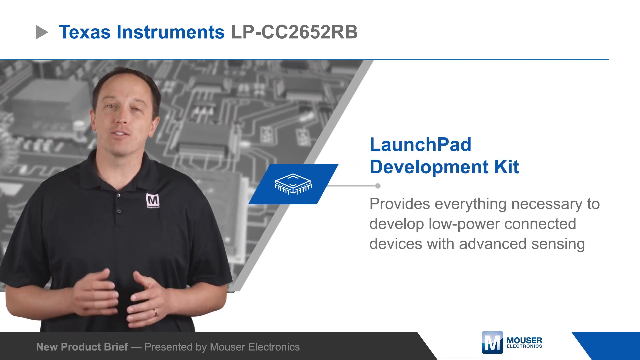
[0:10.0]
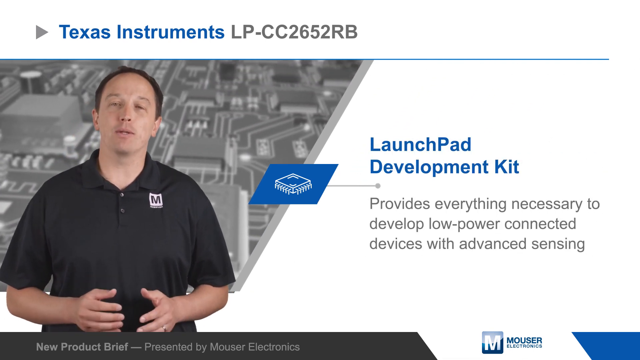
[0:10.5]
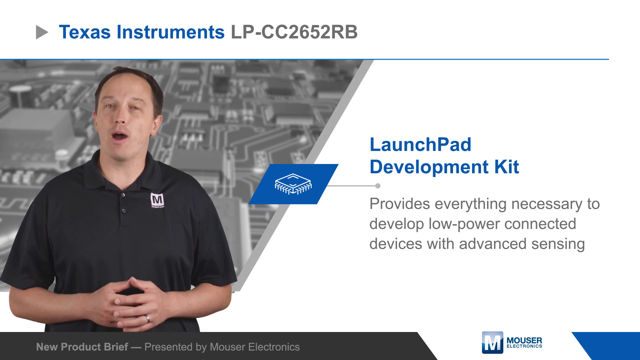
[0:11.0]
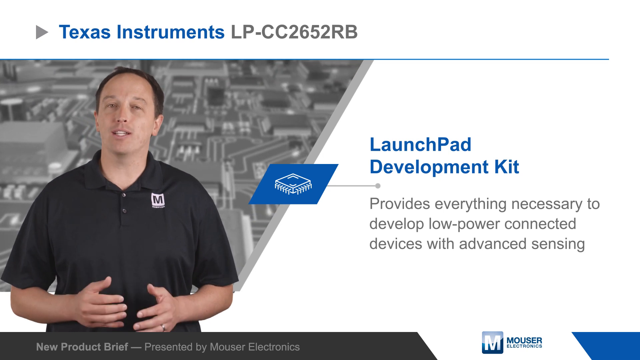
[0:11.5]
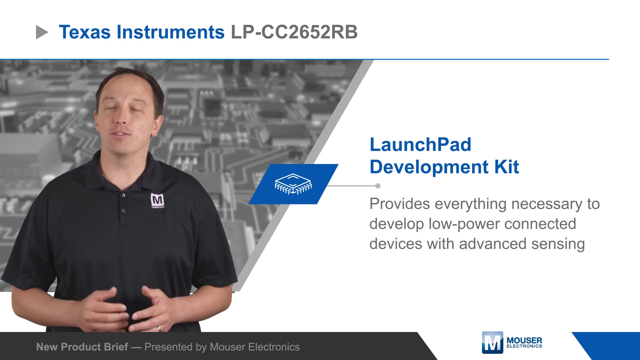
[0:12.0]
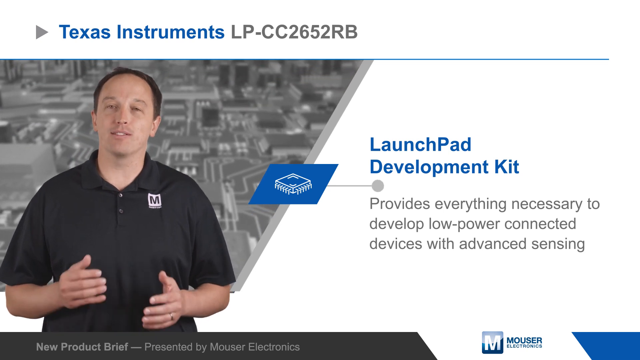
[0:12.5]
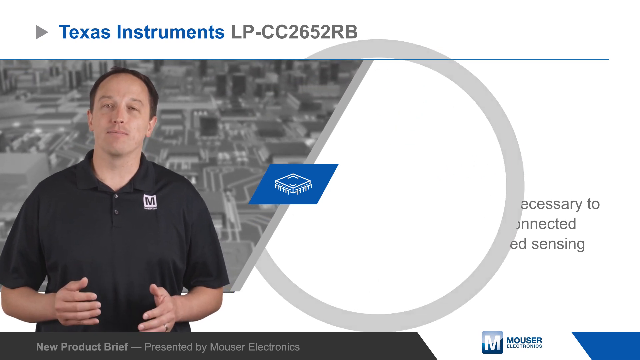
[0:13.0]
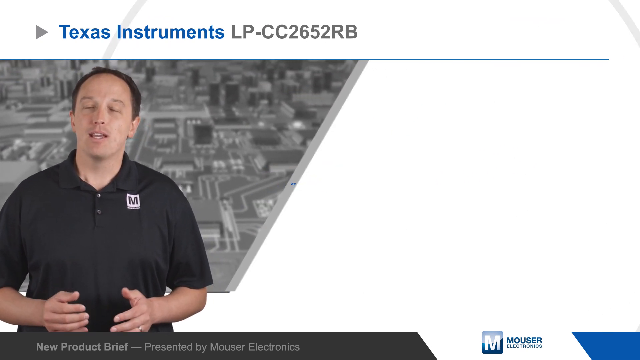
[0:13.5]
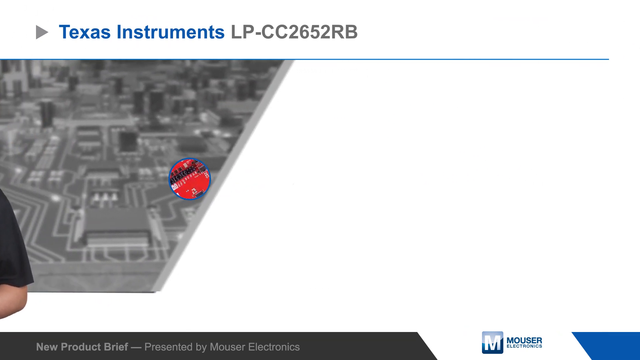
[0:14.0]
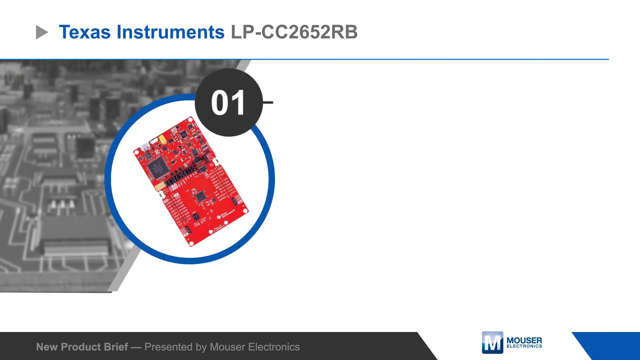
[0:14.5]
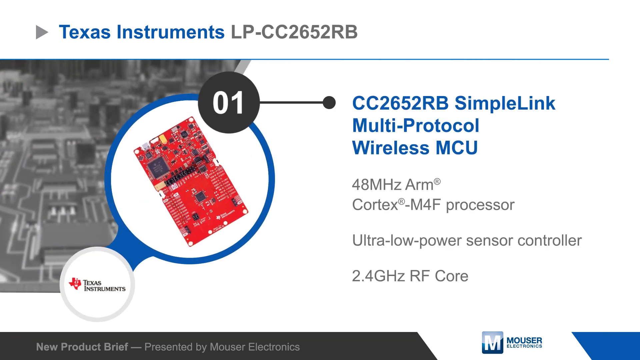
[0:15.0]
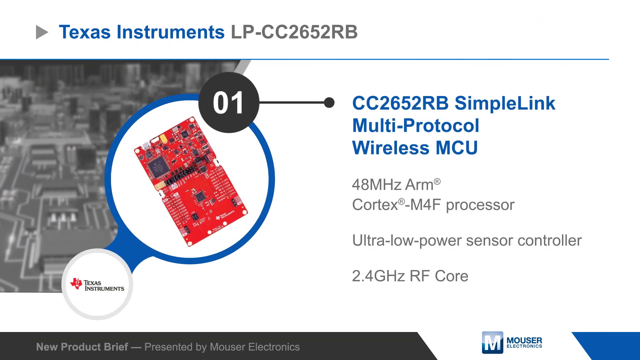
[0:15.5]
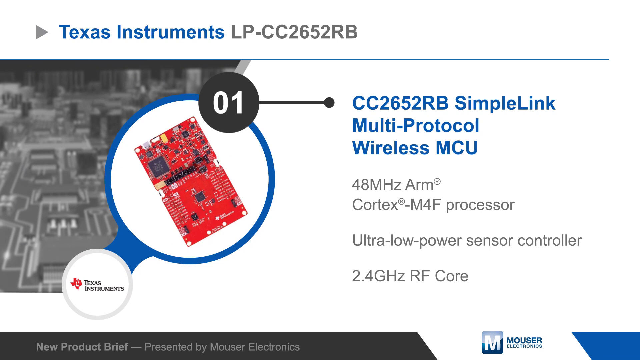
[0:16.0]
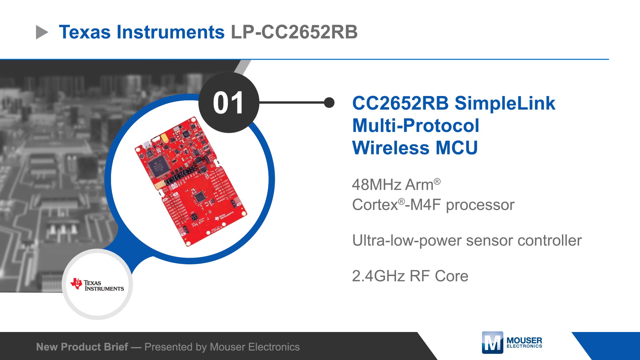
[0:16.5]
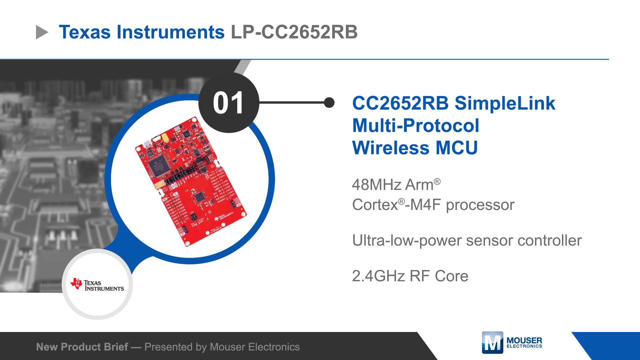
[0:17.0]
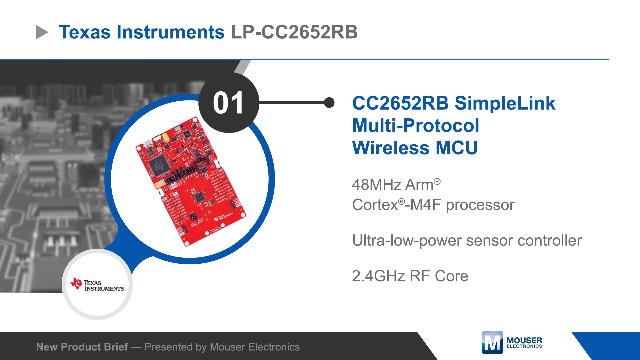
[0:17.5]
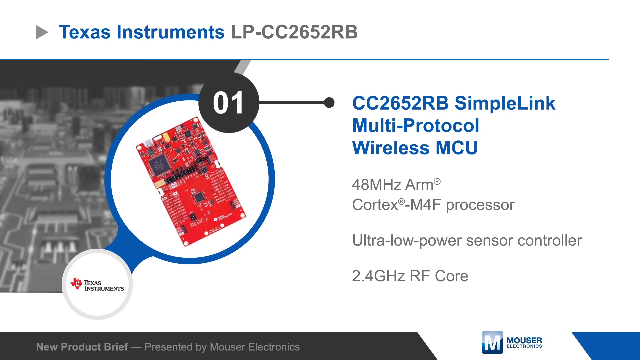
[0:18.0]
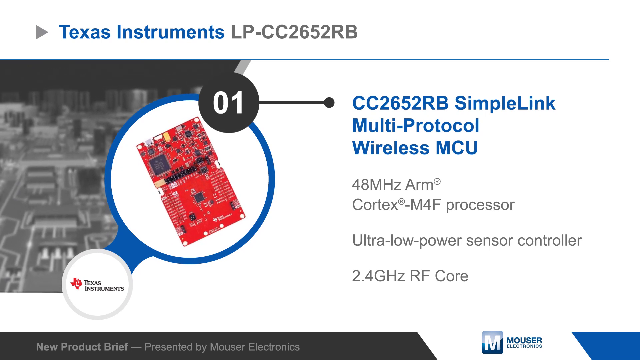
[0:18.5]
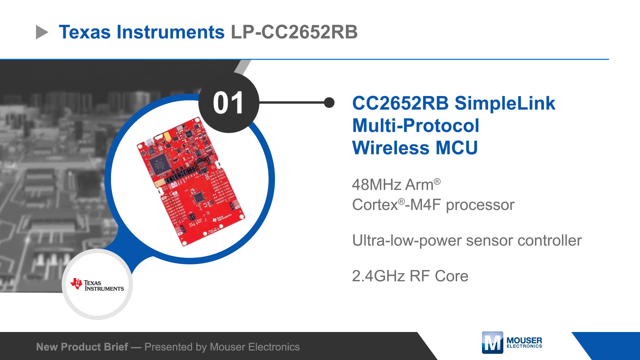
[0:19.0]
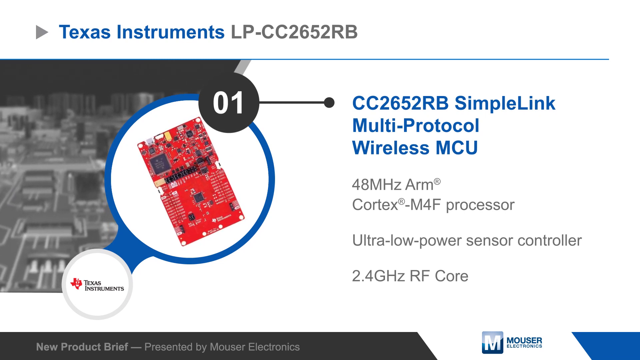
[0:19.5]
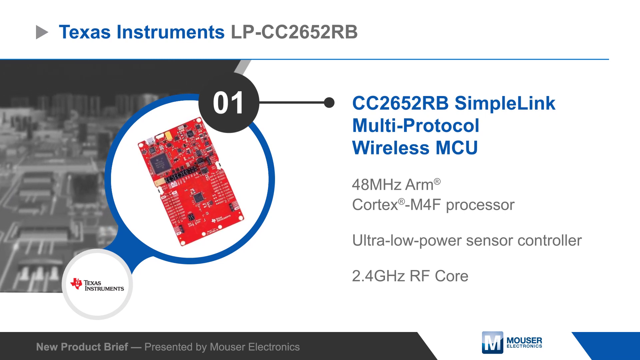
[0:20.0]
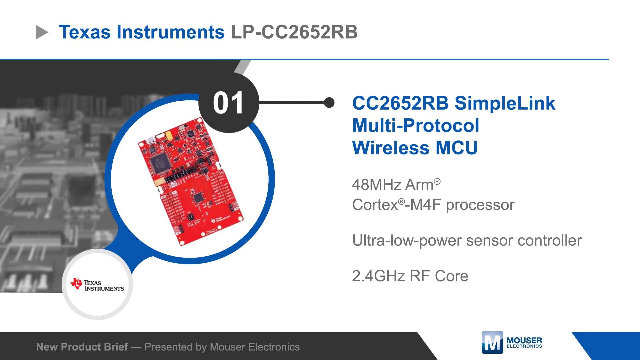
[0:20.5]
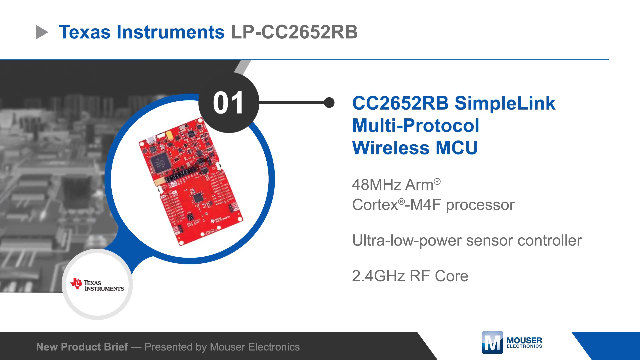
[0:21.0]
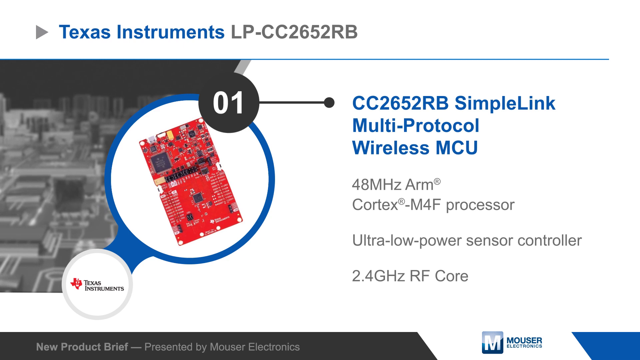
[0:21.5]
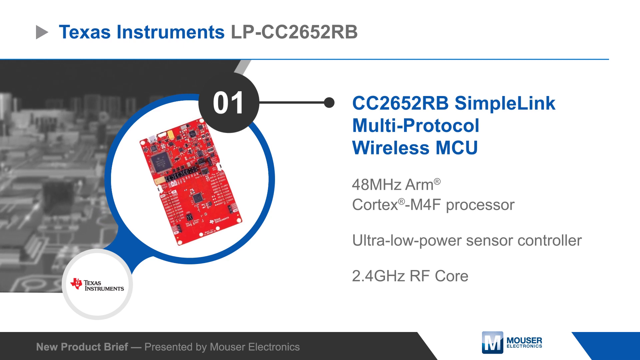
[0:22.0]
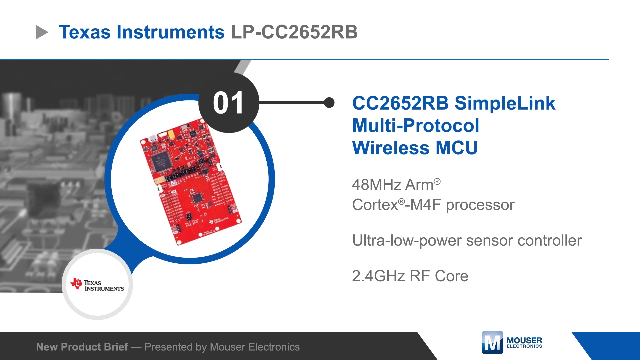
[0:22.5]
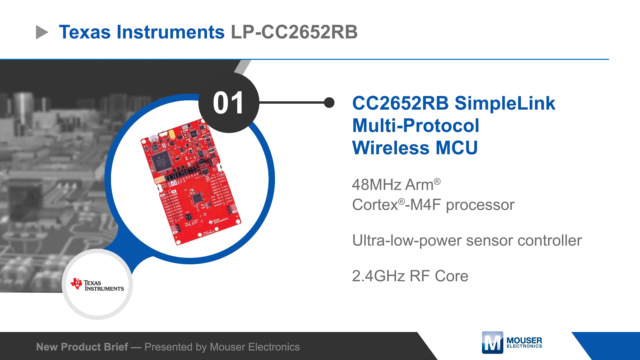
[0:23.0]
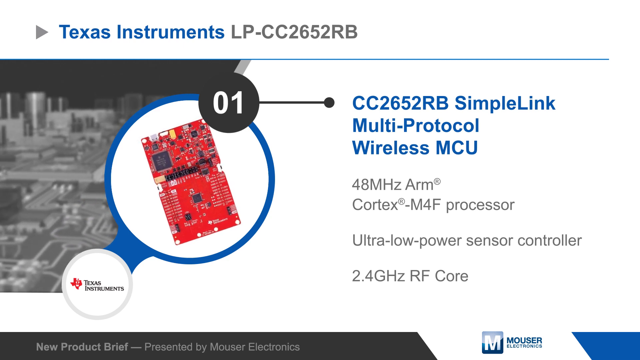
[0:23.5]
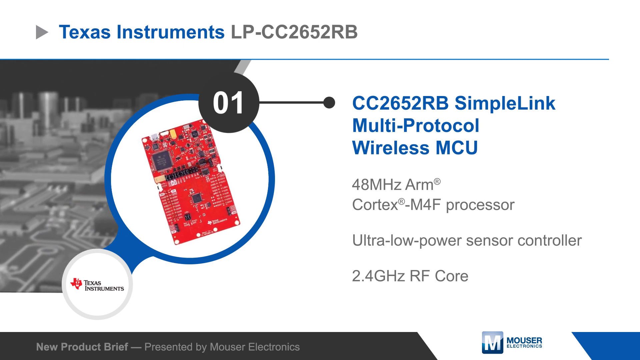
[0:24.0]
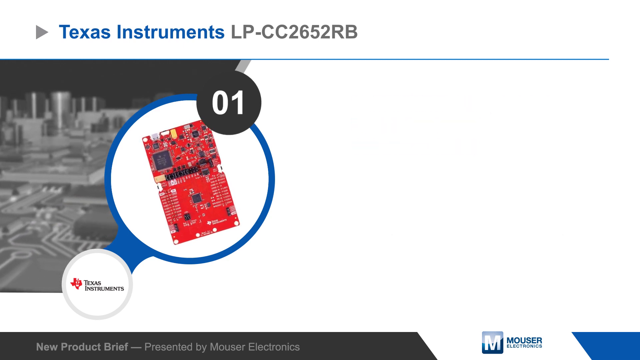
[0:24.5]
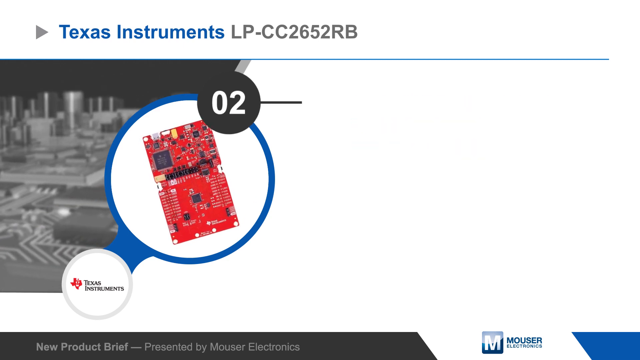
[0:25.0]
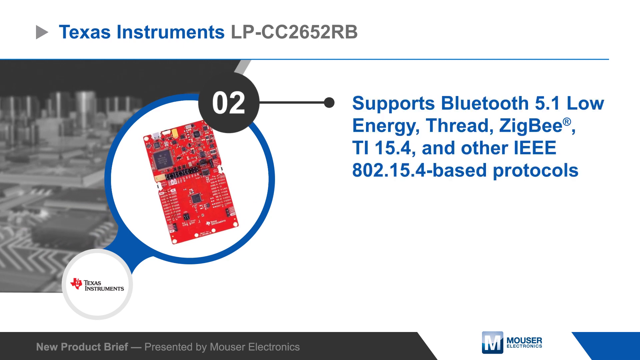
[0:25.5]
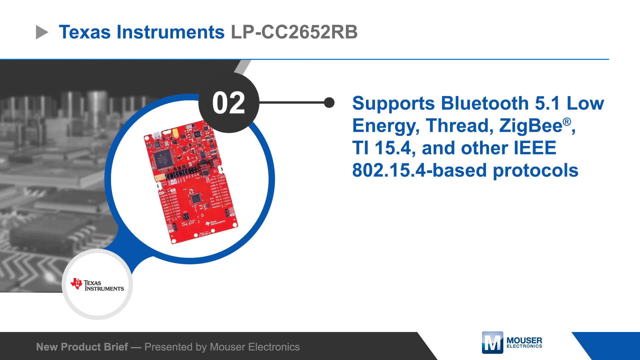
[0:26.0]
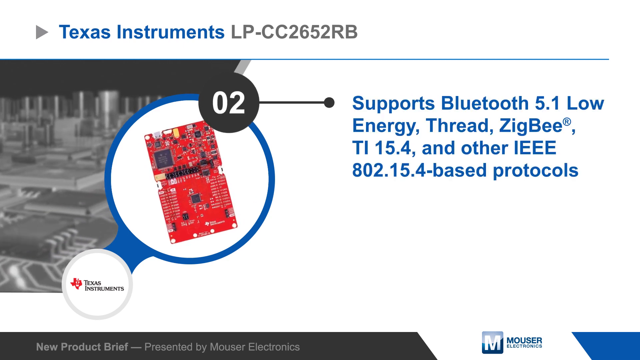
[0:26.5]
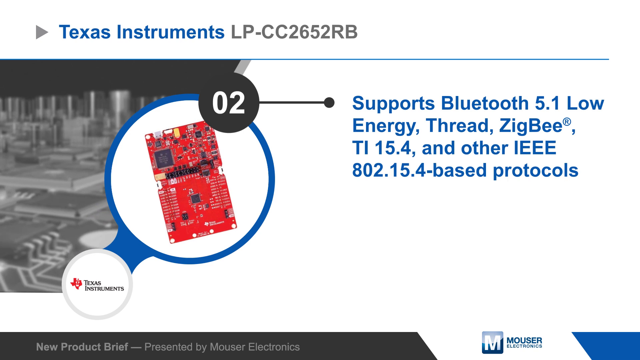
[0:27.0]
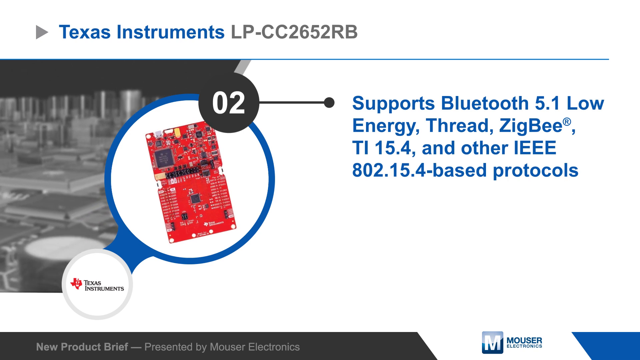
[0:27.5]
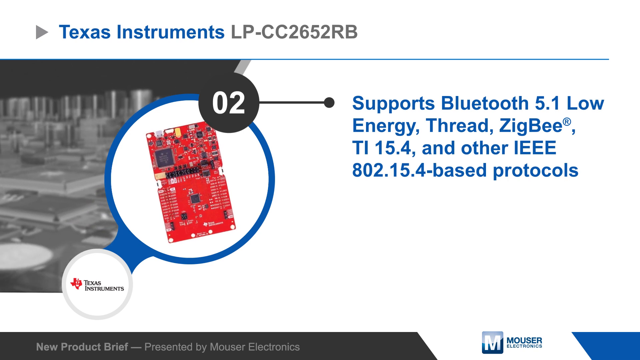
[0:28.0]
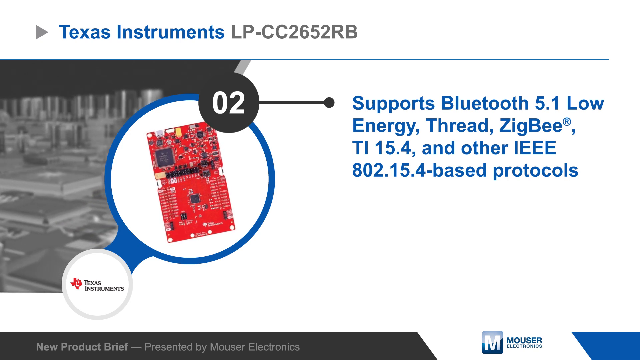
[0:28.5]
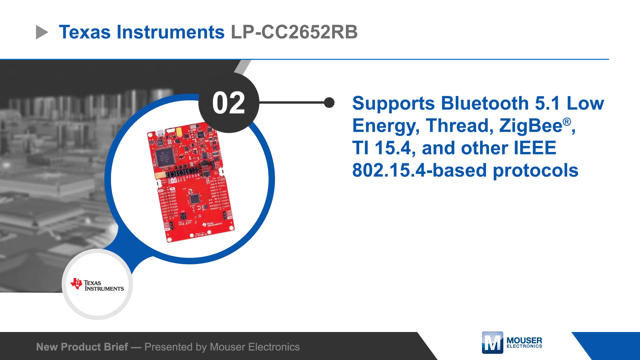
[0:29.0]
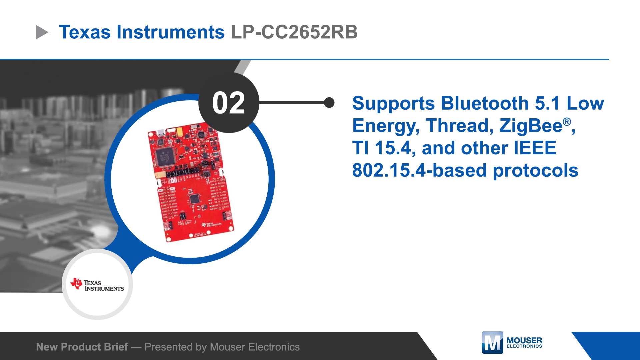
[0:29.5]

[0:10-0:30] The man continues presenting the new product, which has the code name LPCC2652RB and seems to be a kind of chipset, probably made in collaboration with Texas Instruments. The chip is called the SimpleLink Multiprotocol Wireless MCU and has a 48 MHz ARM Cortex-M4F processor and a 2.4 GHz ARM core. A picture of the product appears inside a blue circle on the left side of the presentation, against a white background. This seems to be the first slide of technical specifications for the chipset. On the left side, a black and white animation of a 3D chipset model plays endlessly. The Texas Instruments logo is inside a tinier circle at the bottom left corner of the chipset's circle.